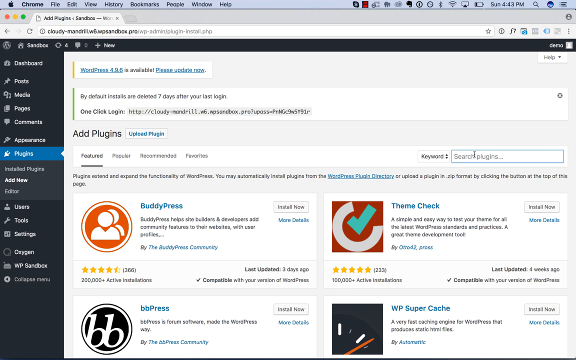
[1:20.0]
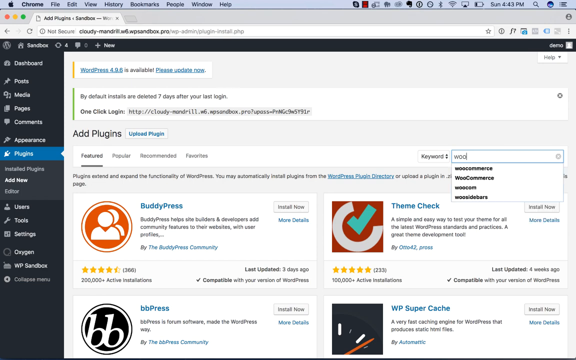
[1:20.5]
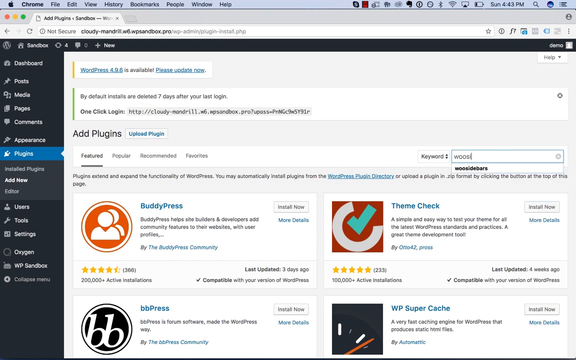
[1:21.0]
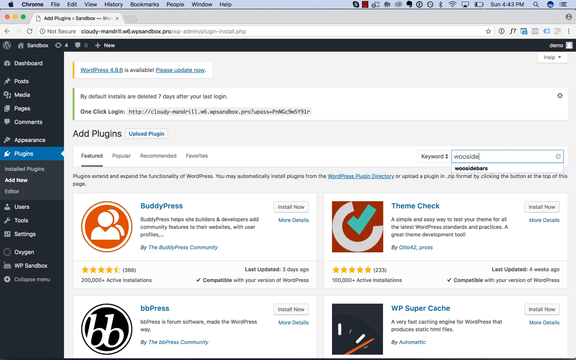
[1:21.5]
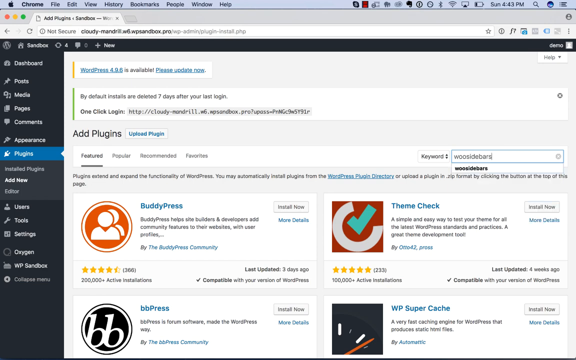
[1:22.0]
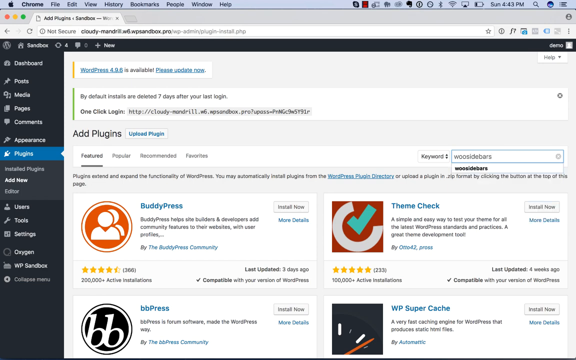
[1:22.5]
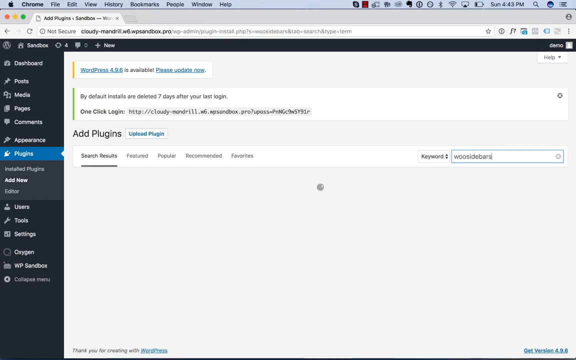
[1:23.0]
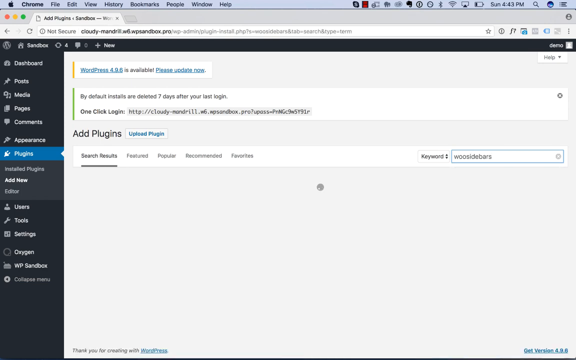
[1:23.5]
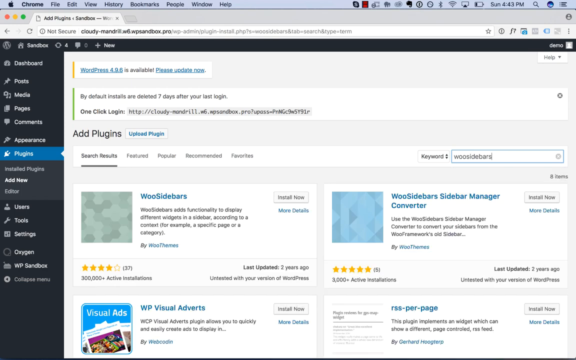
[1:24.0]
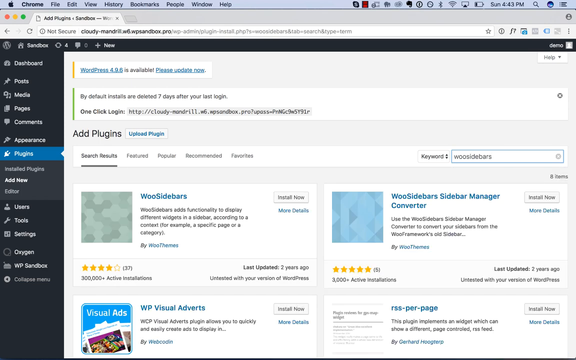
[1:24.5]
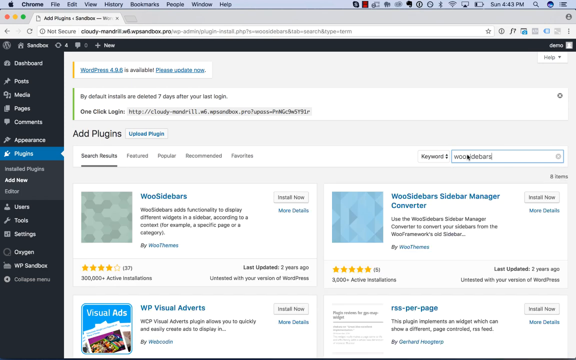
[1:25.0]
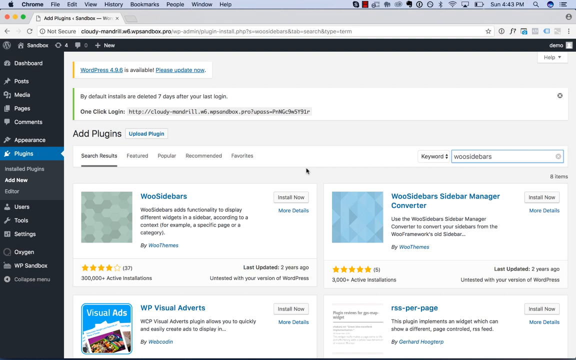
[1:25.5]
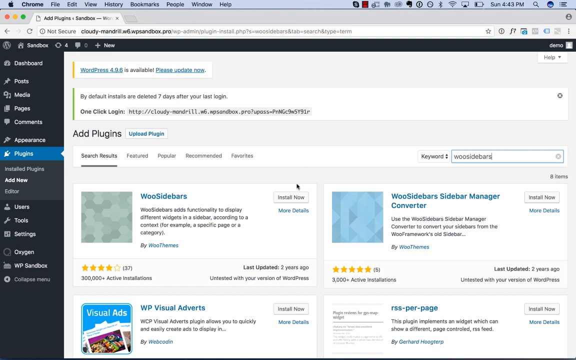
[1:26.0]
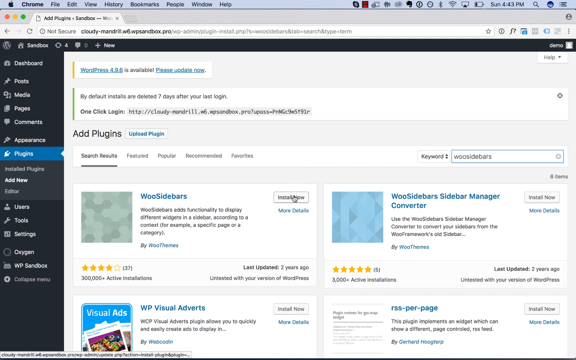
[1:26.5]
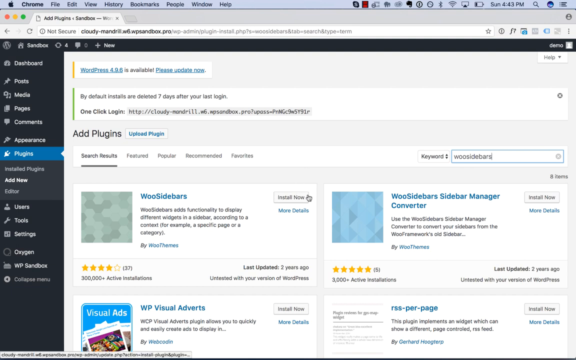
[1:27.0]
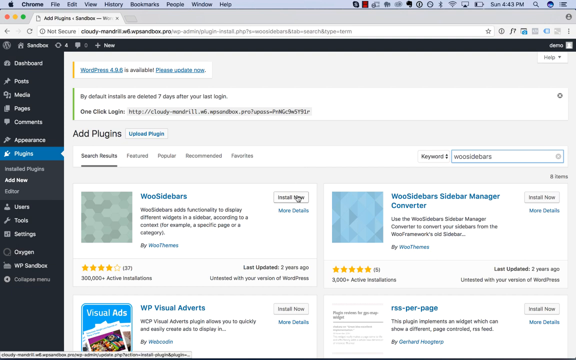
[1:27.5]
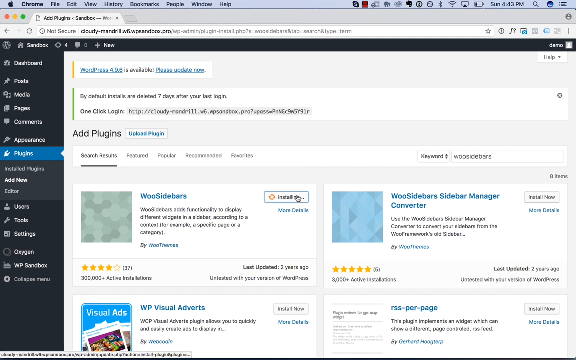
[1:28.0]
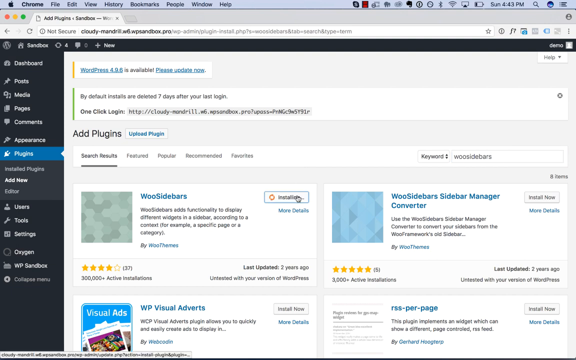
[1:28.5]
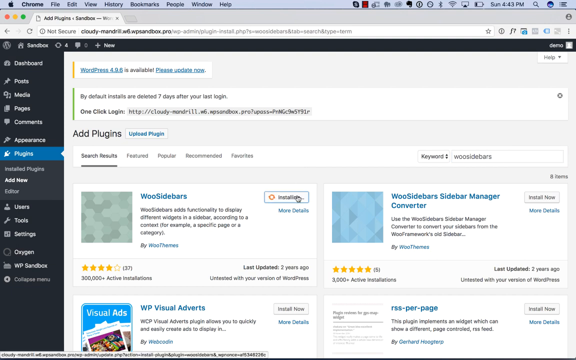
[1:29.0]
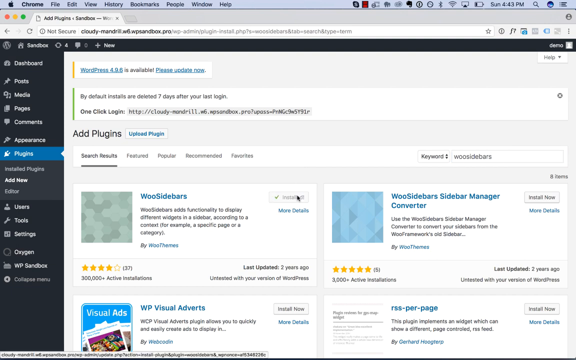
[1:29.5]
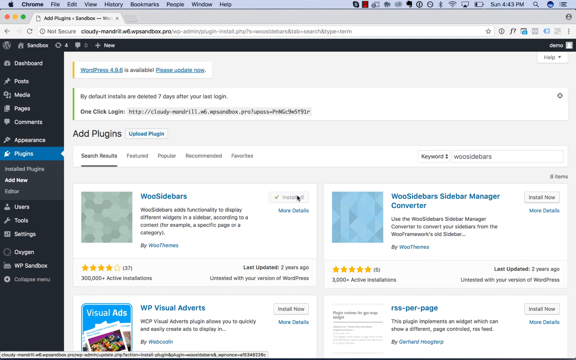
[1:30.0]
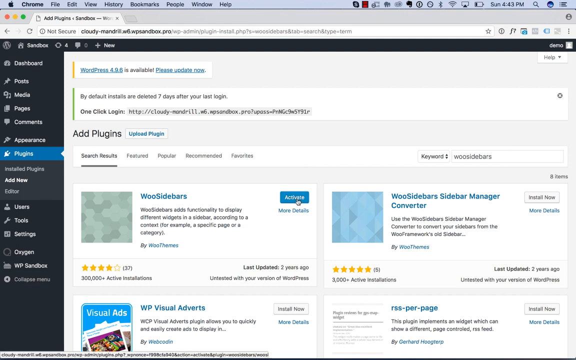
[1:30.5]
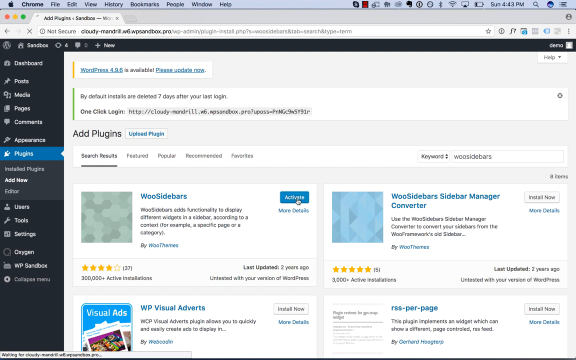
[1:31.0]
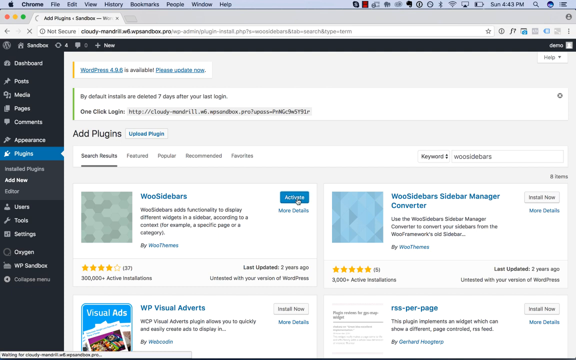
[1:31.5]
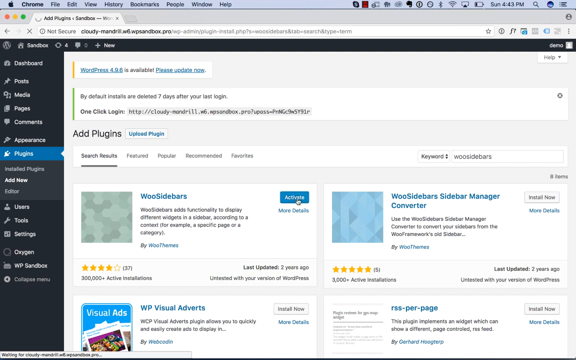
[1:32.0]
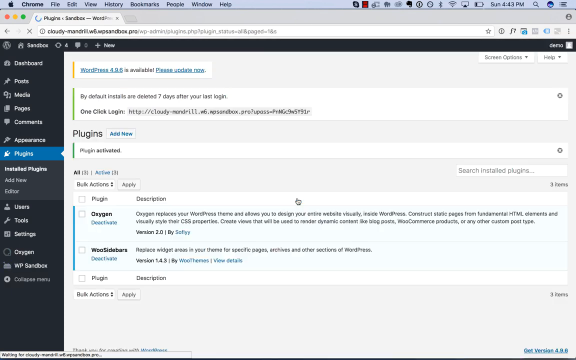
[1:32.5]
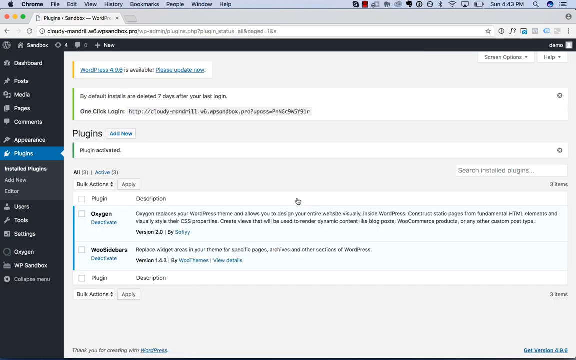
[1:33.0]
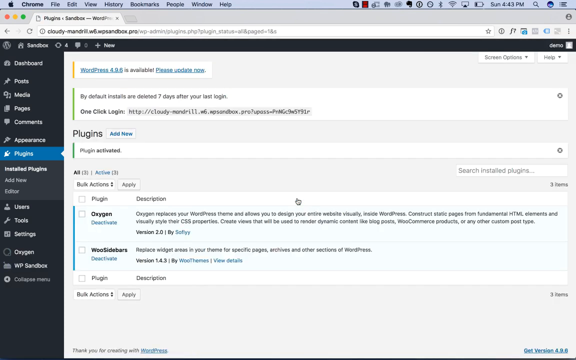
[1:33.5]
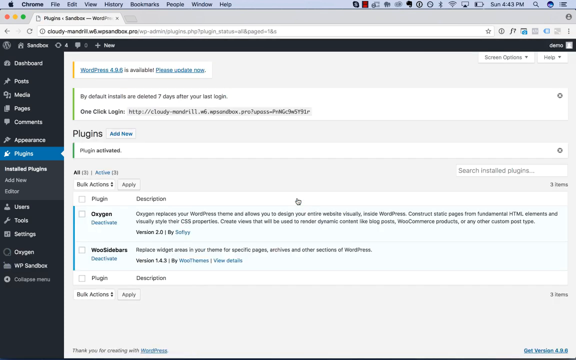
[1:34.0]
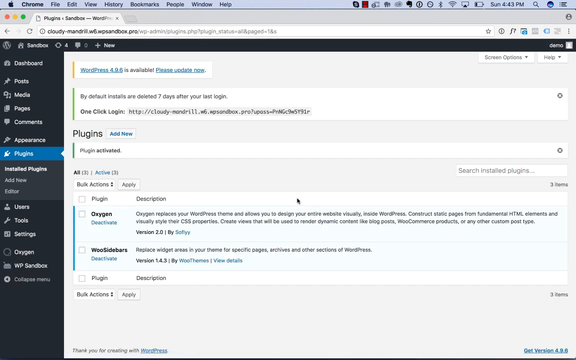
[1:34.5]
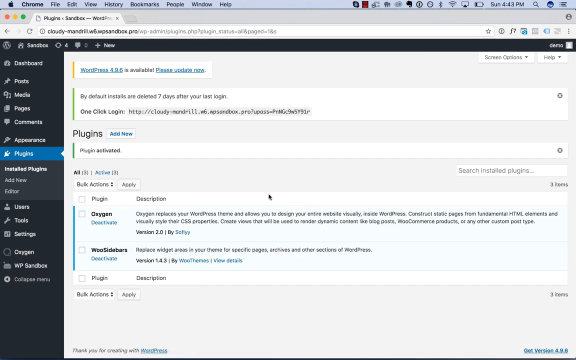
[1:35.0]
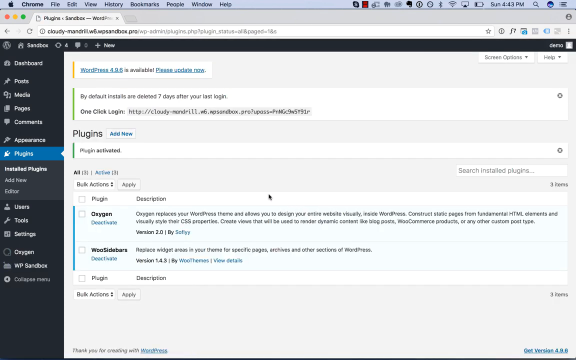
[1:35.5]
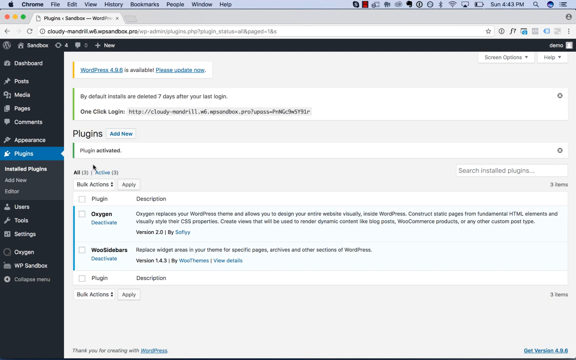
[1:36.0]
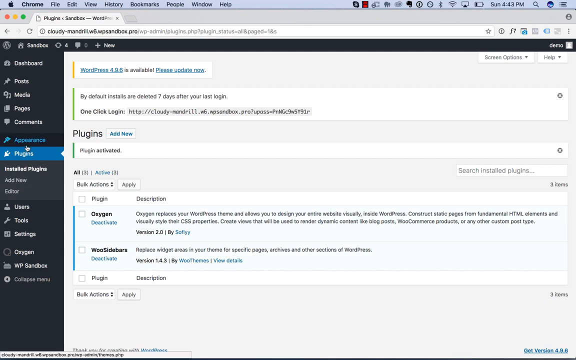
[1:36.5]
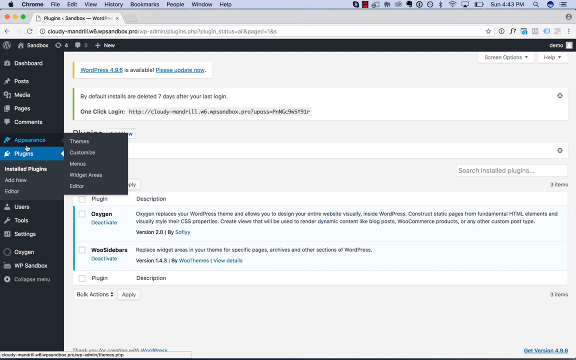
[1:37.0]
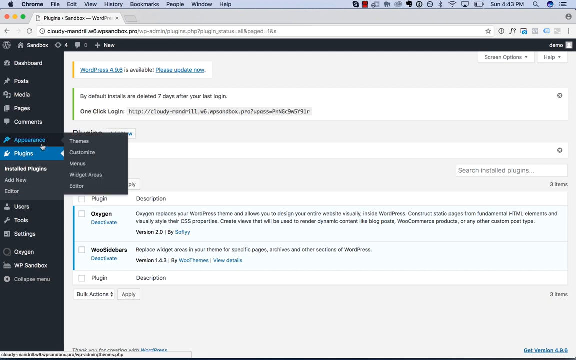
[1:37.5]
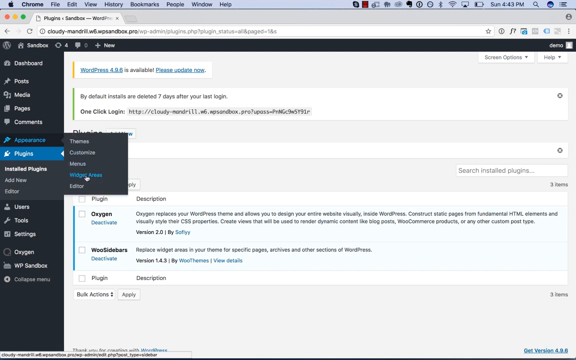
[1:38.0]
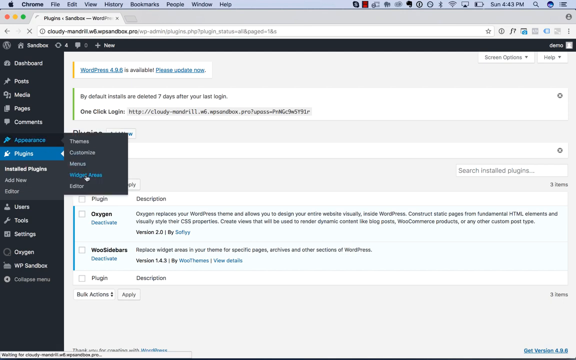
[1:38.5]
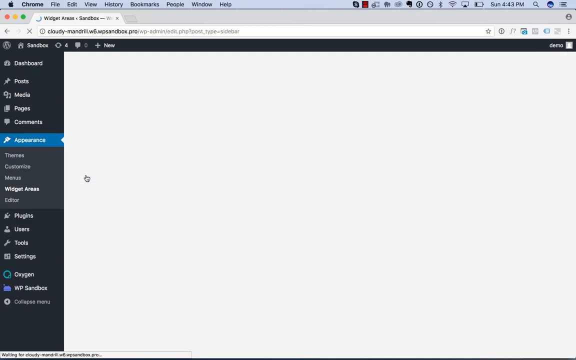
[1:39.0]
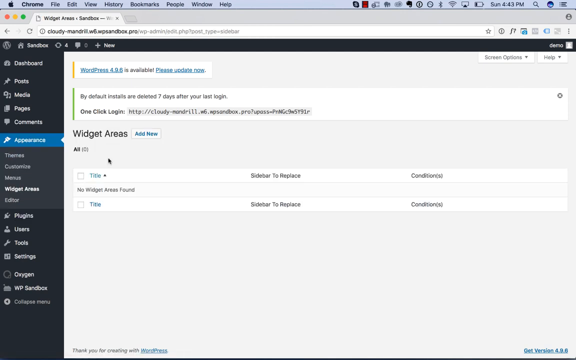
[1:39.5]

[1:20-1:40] The Mac desktop shows Chrome with a tab open to Oxygen Visual Editor, where the user is setting up a WordPress site. In the left-hand navigation they have gone to plugins and Add a plugin, and they type the keyword WooSidebars and press enter. On the WooSidebars plugin they hit Install at its top right, then hit Activate as soon as it finishes installing, and the plugin shows as installed and activated. They go back to Appearance, then to Widget Areas, to add a new widget area using the newly installed plugin.